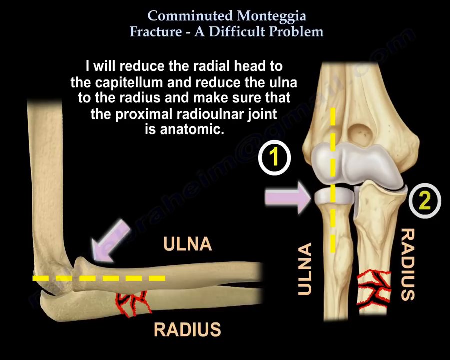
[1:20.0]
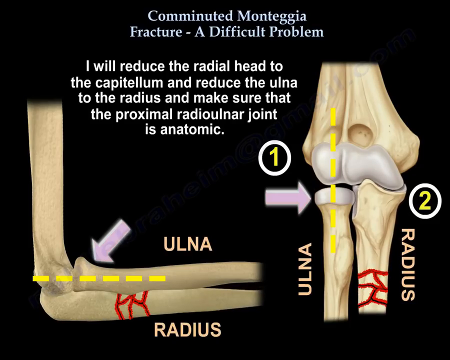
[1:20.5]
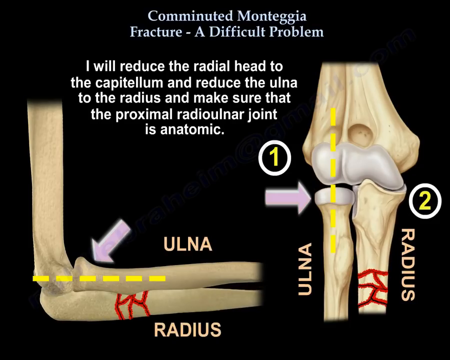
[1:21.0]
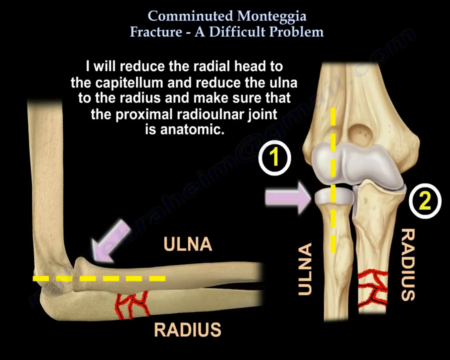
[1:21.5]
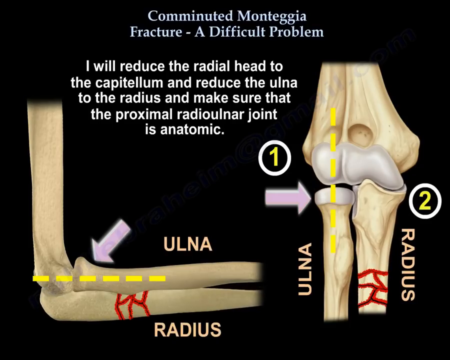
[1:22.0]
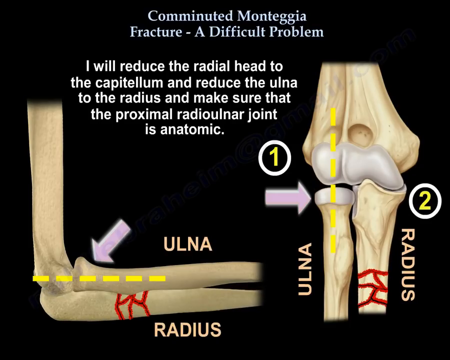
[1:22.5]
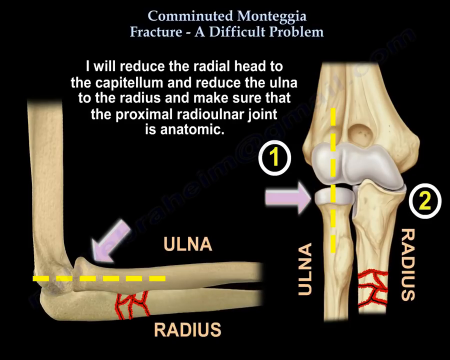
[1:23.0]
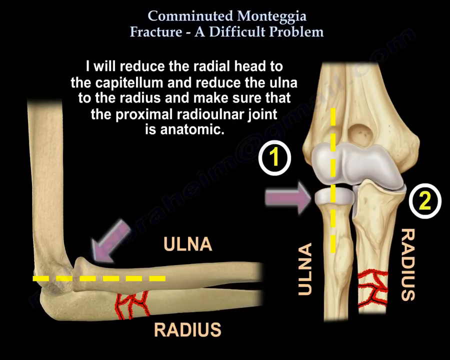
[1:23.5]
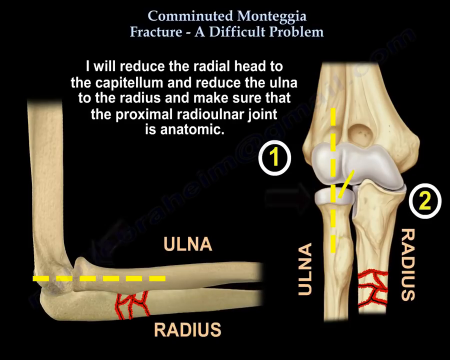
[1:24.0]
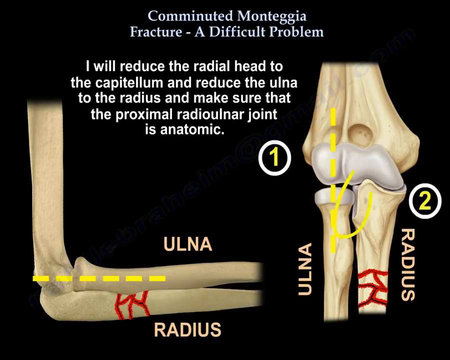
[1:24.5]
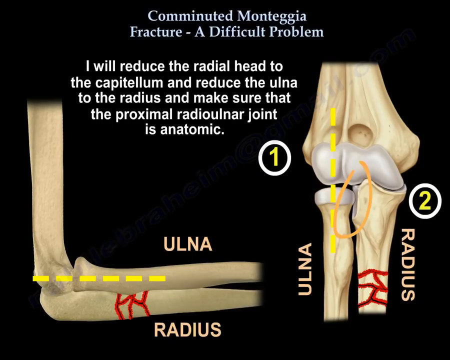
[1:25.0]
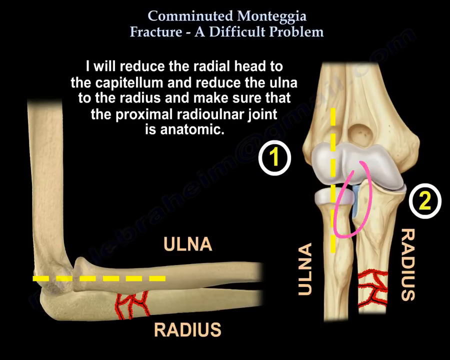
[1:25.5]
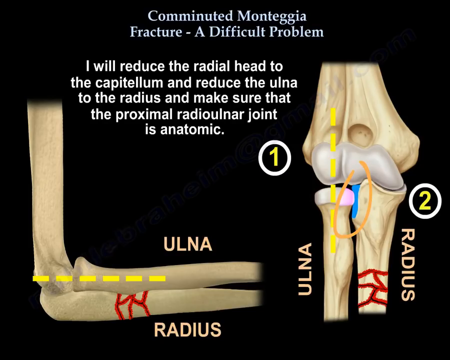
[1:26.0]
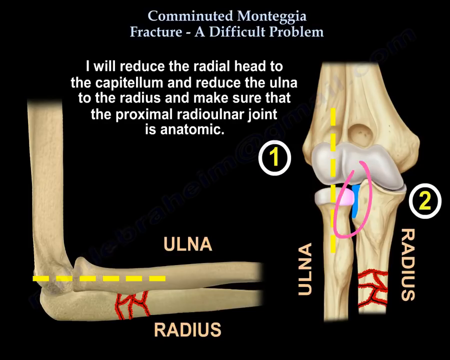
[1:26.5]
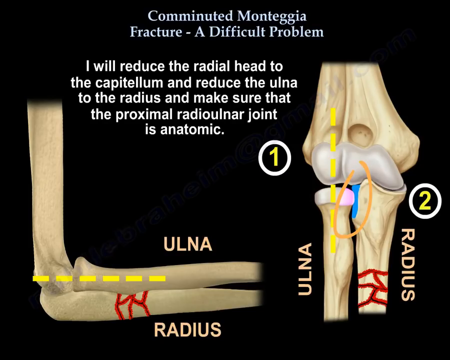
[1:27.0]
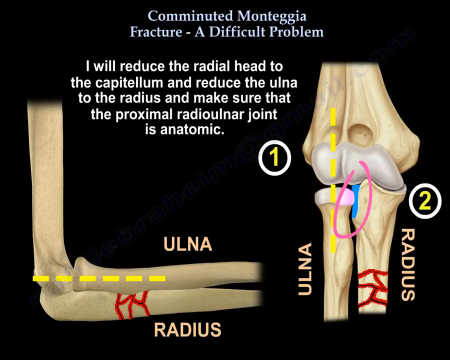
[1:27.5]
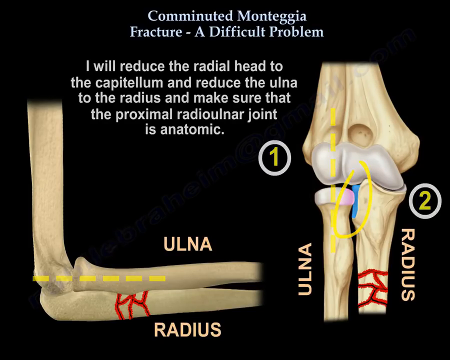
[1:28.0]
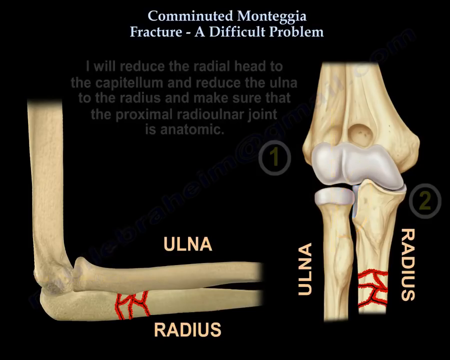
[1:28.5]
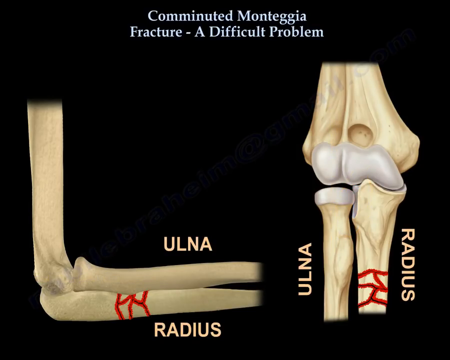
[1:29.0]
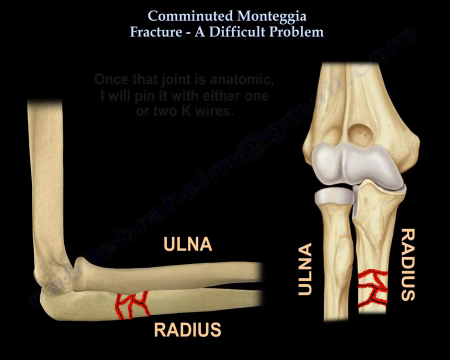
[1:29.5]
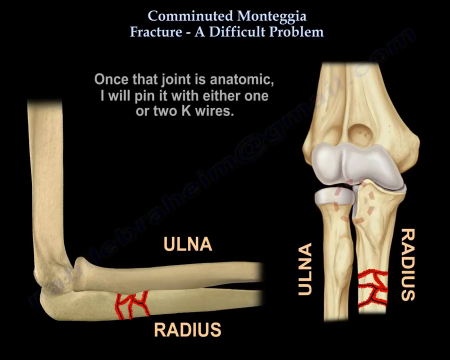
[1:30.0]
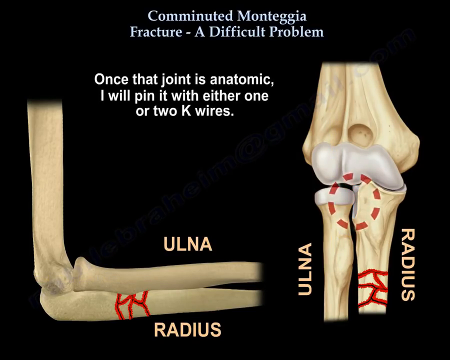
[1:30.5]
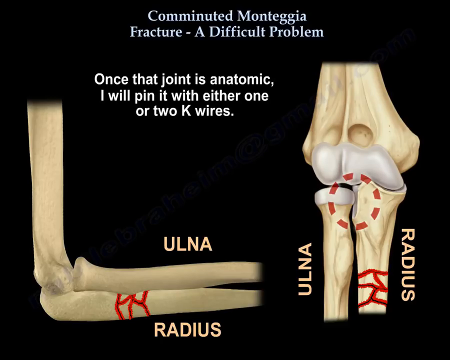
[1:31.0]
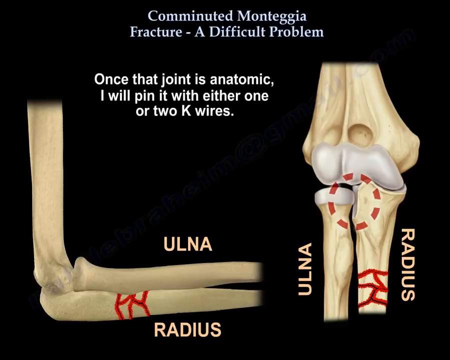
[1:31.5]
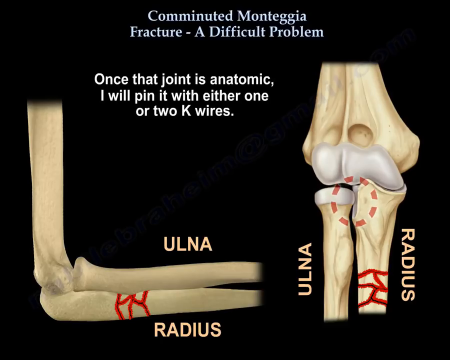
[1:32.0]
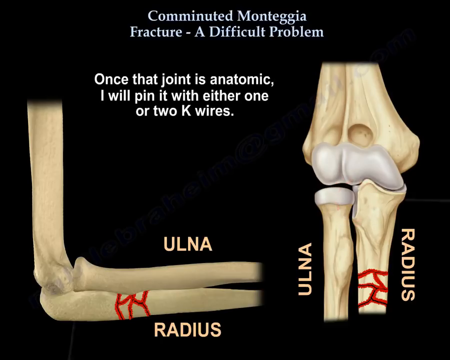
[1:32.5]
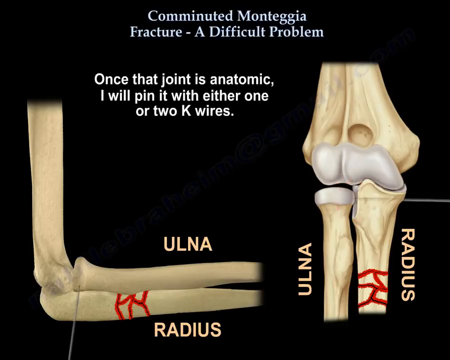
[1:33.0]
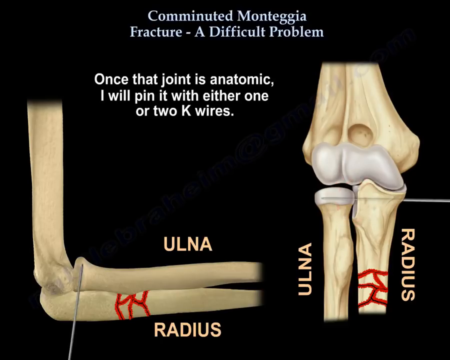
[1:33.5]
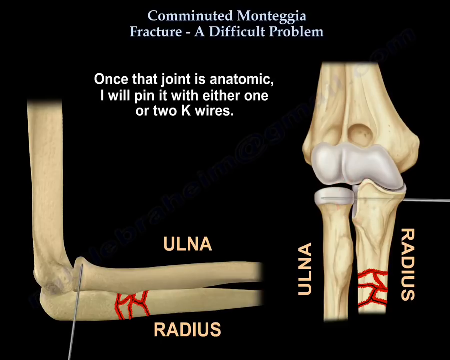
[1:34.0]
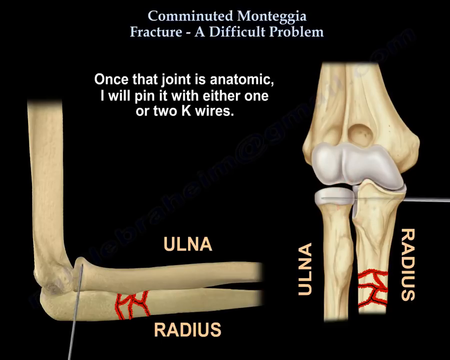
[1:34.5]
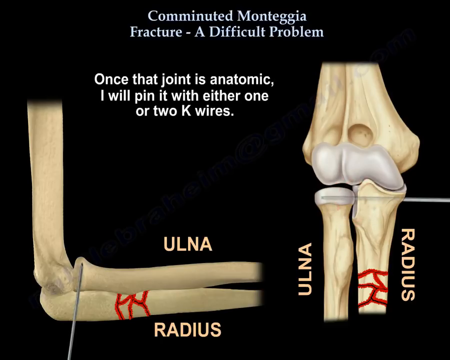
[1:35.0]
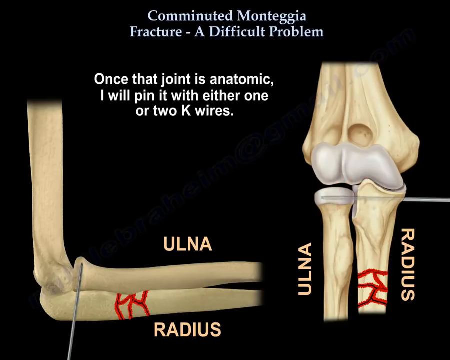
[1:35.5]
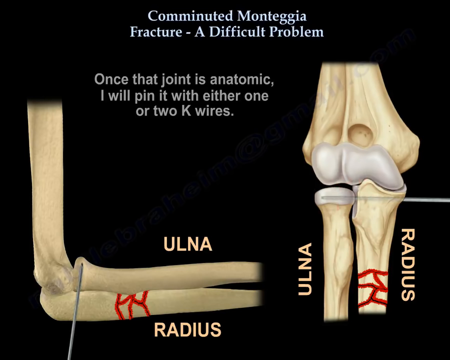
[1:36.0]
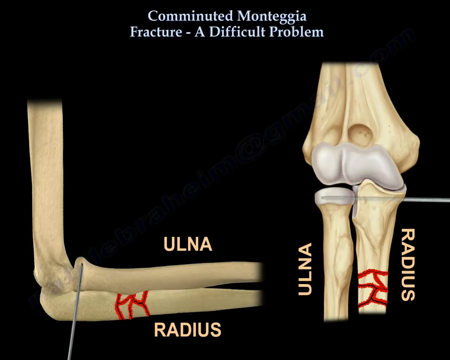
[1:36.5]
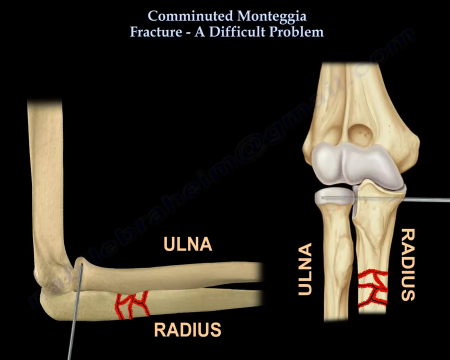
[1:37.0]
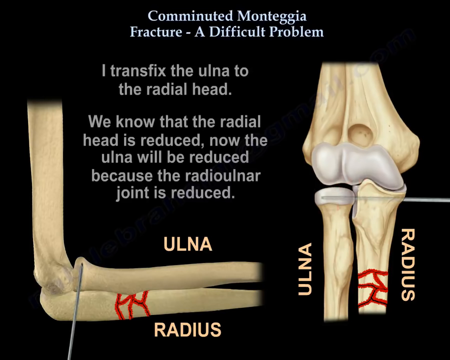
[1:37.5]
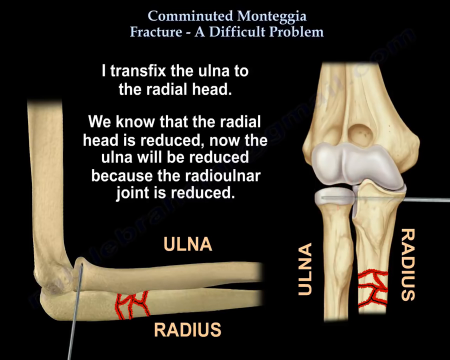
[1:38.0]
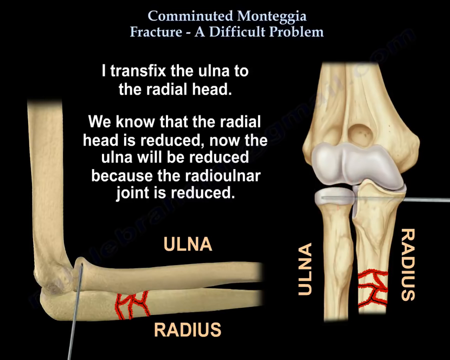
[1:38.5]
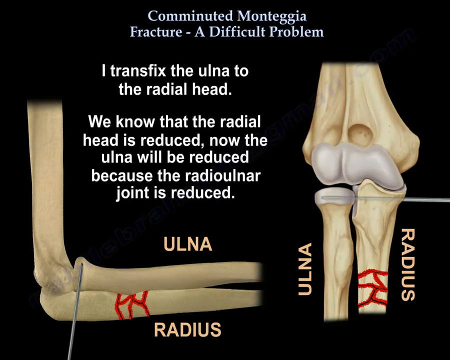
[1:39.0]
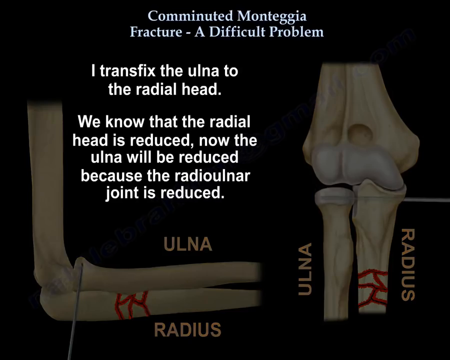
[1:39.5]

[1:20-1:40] Below the main heading, the text reads "I will reduce the radial head to the capitellum and reduce the ulna to the radius and make sure that the proximal radial ulna joint is anatomic." On the left-hand side is the previous graphic, reduced in size, now with a yellow line made up of six dashes across the elbow and the joint with the top bone. A white arrow on the top bone points to the joint; the word "ulna" is above the top bone and the word "radius" is below the bottom bone. On the right-hand side is a separate, vertical graphic showing the elbow. On its left, the ulna has a white cap with an arrow pointing to it, and above the arrow is a yellow number one in a black circle with a white border. A yellow dashed line runs across the joint, and on the other side is a yellow number two in a black circle with a white border. The word "radius" is written in vertical lettering on the side where the break is. The area of the joint is then highlighted with a blue line and a purple sort of encircling: the blue line runs between the white cap on the ulna and the top of the other bone, encircling the joint, and starts to flash.